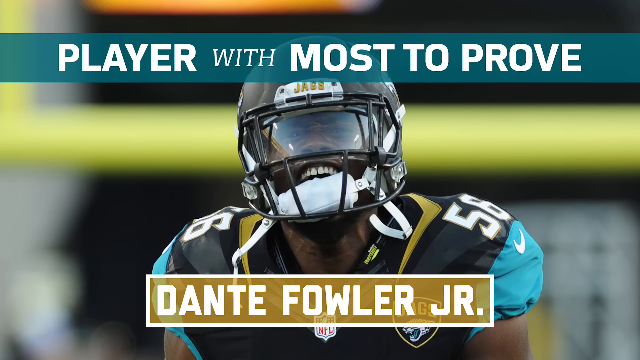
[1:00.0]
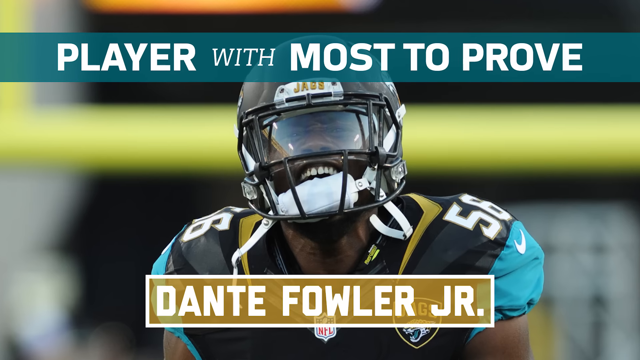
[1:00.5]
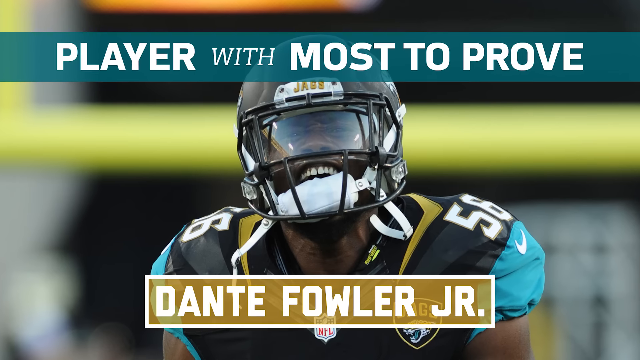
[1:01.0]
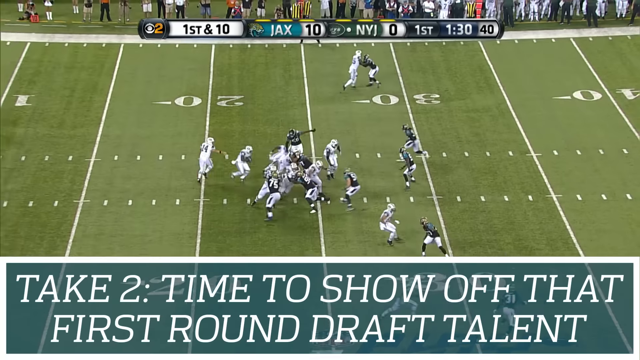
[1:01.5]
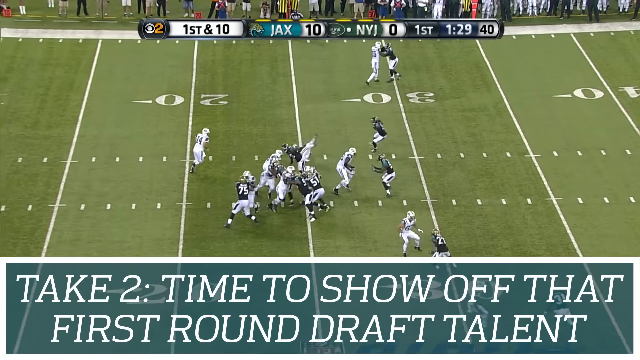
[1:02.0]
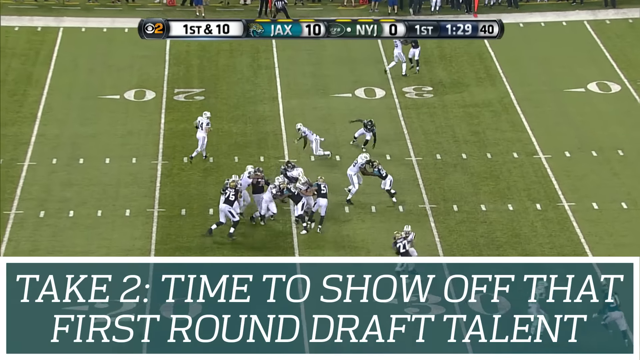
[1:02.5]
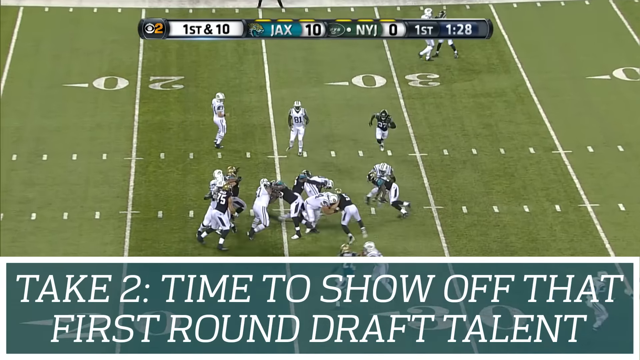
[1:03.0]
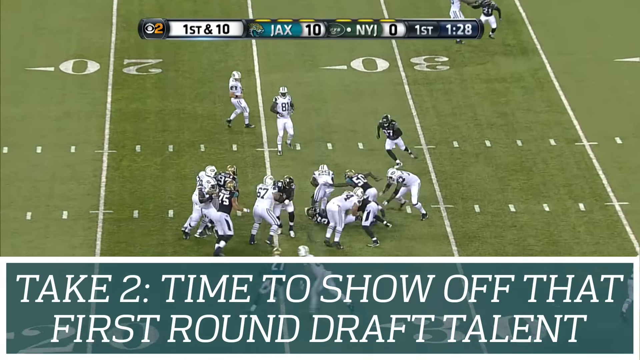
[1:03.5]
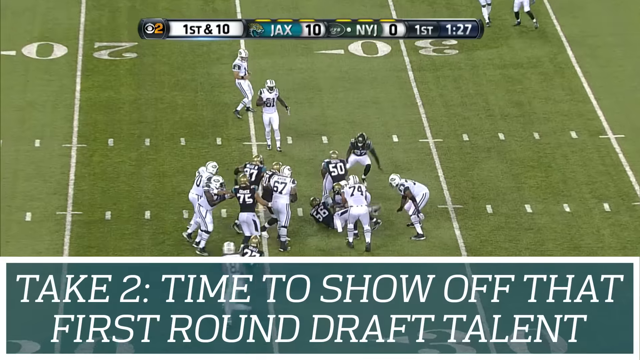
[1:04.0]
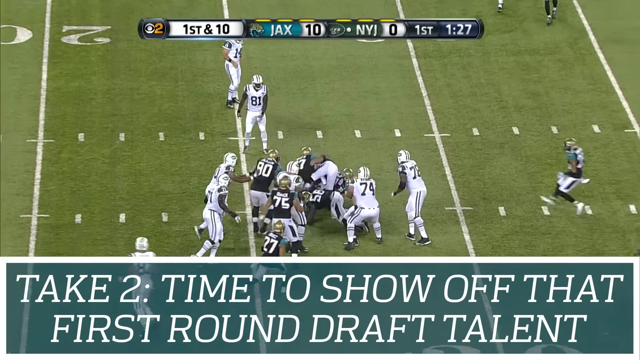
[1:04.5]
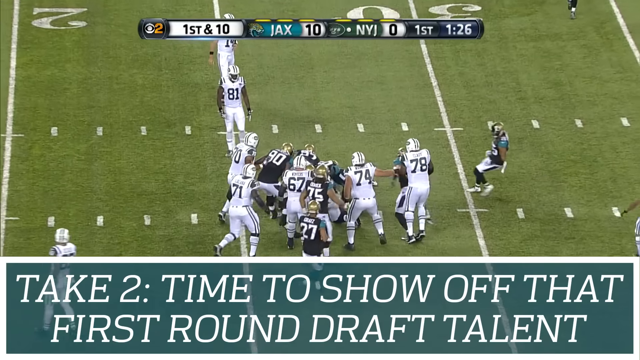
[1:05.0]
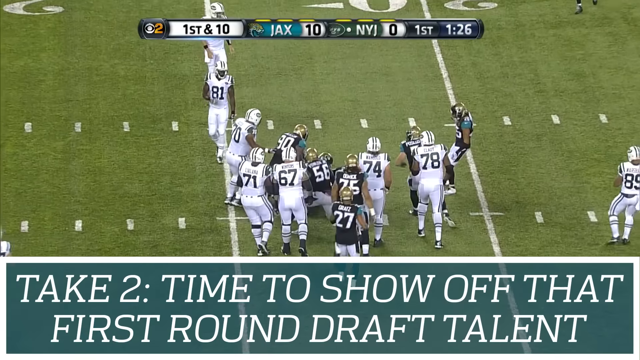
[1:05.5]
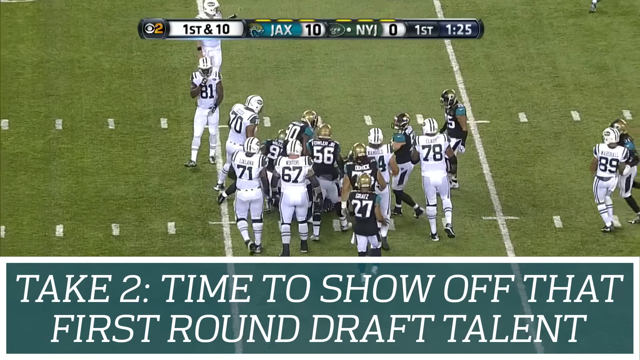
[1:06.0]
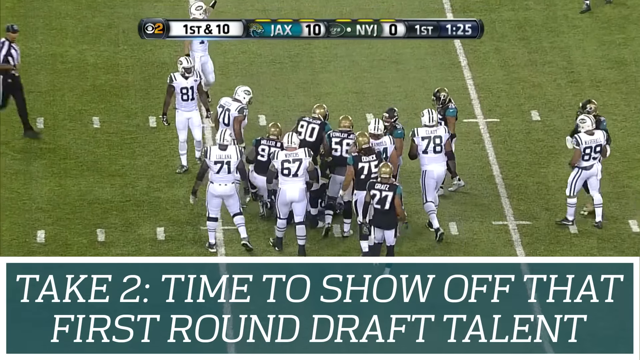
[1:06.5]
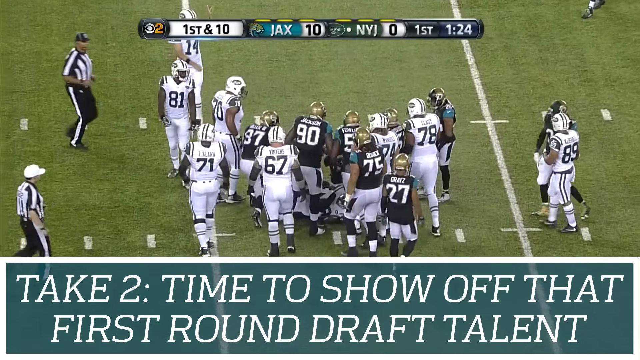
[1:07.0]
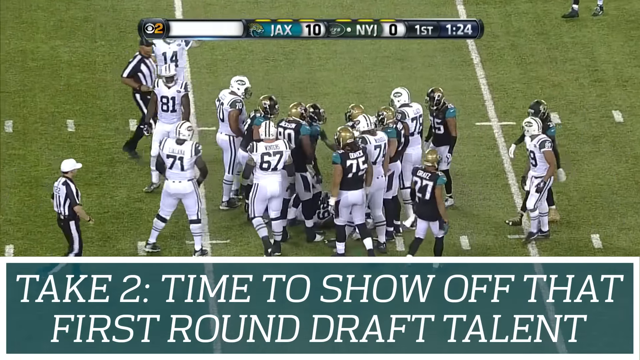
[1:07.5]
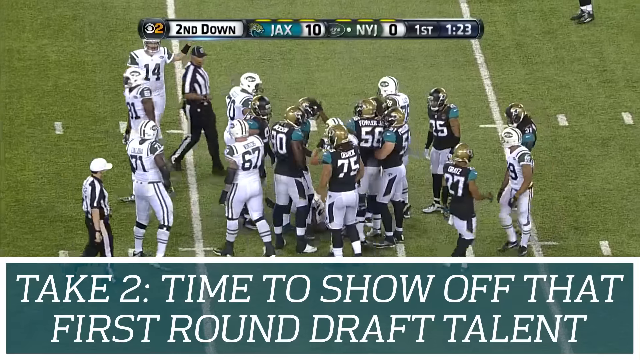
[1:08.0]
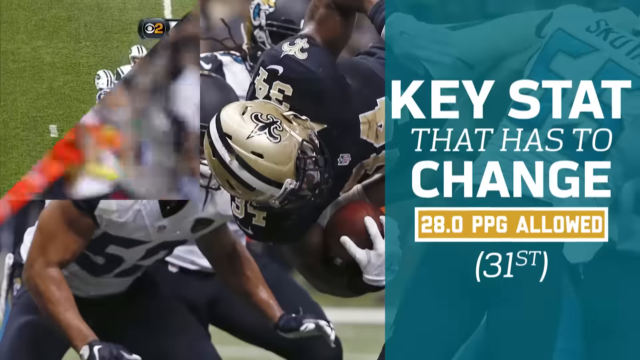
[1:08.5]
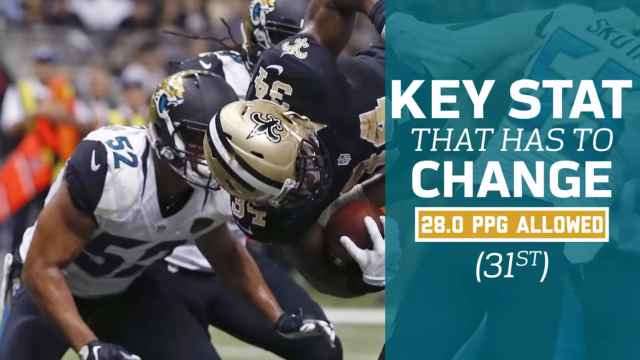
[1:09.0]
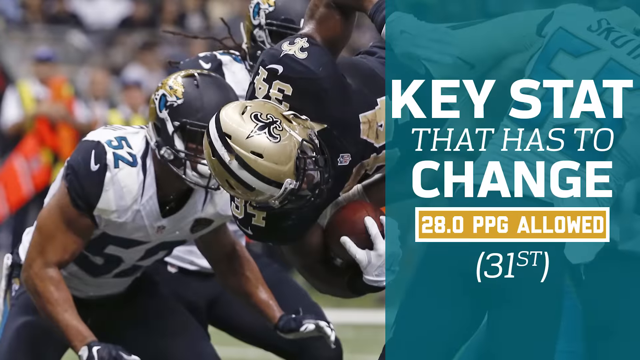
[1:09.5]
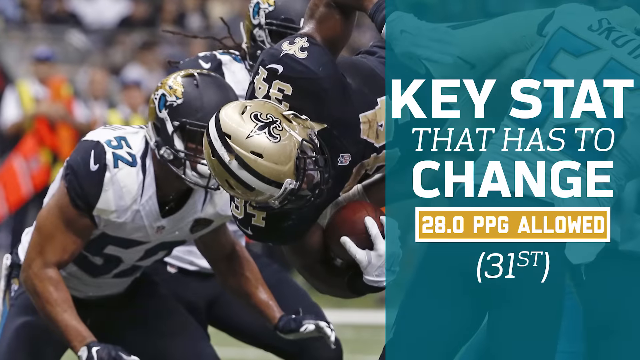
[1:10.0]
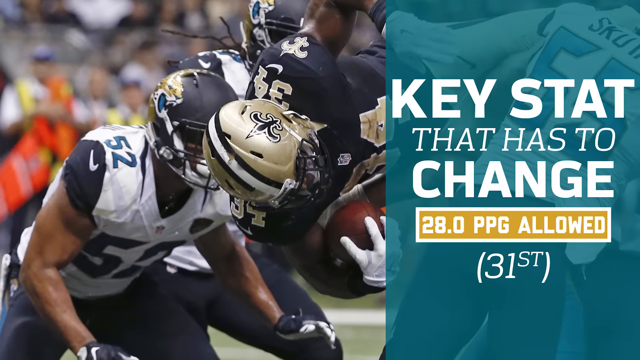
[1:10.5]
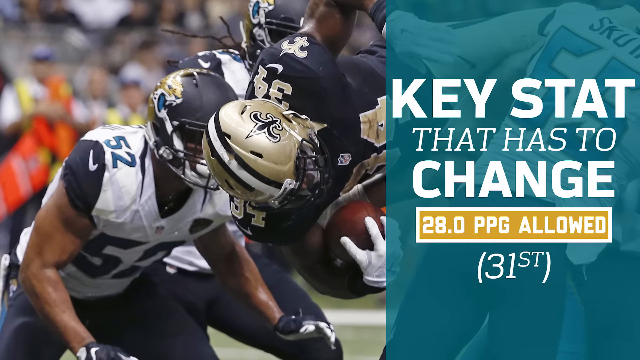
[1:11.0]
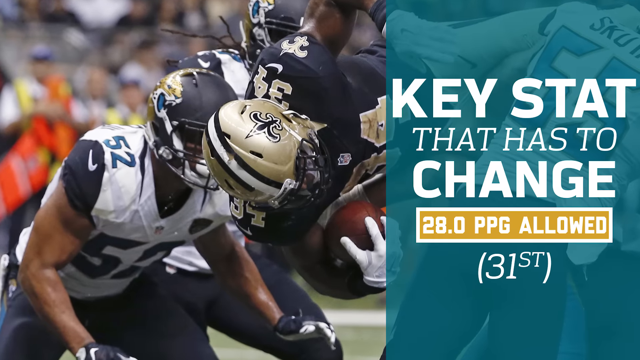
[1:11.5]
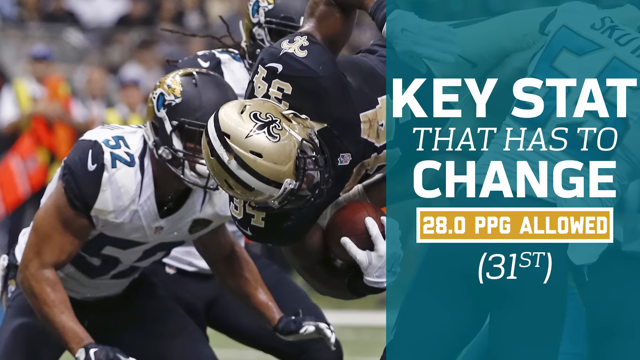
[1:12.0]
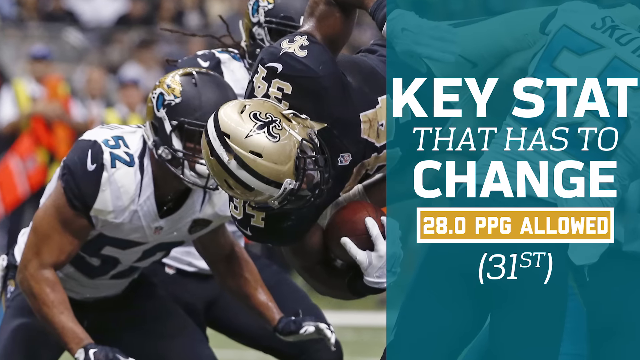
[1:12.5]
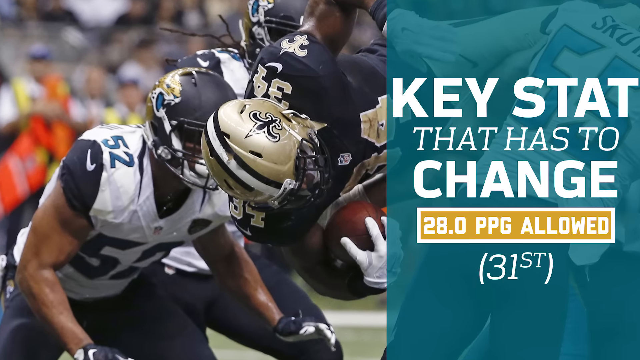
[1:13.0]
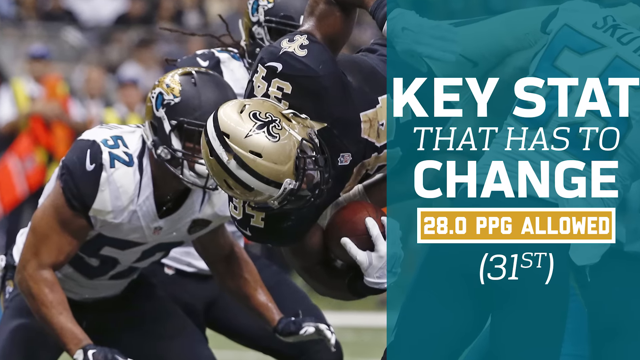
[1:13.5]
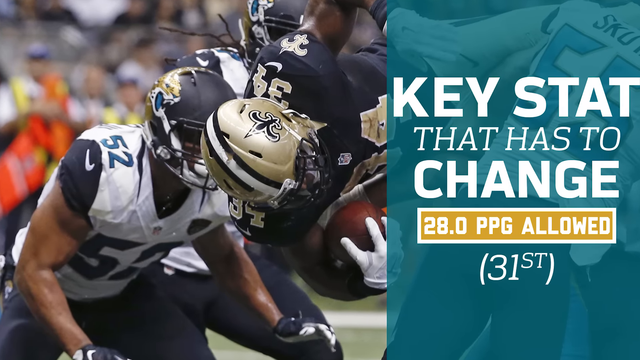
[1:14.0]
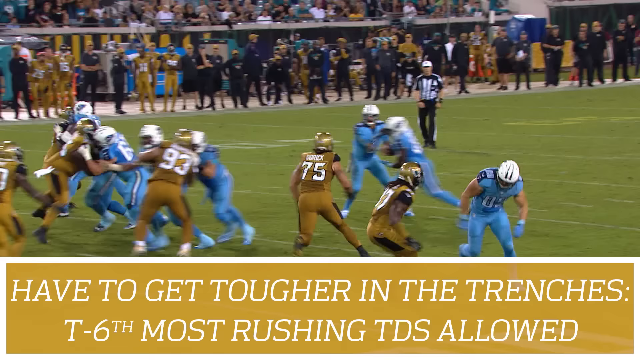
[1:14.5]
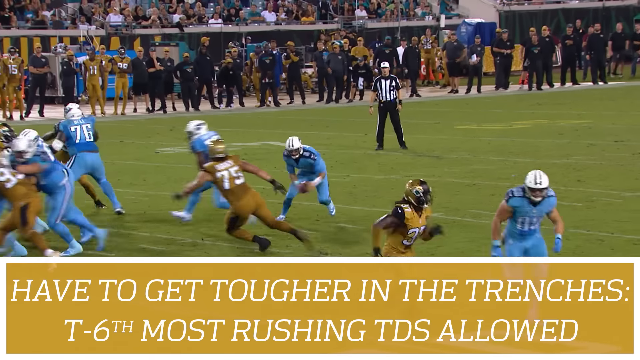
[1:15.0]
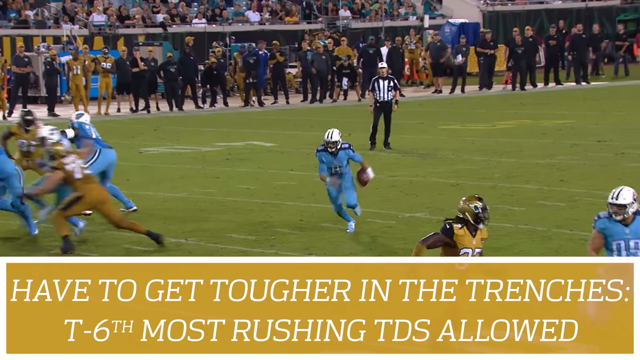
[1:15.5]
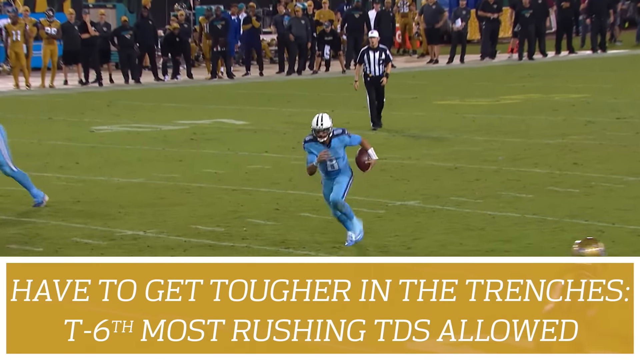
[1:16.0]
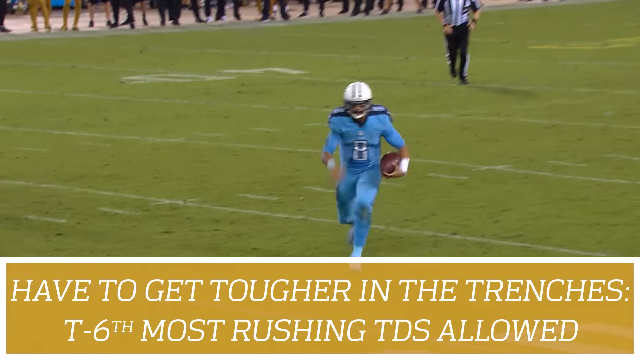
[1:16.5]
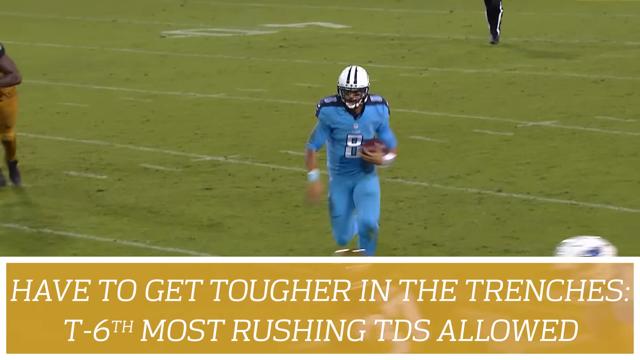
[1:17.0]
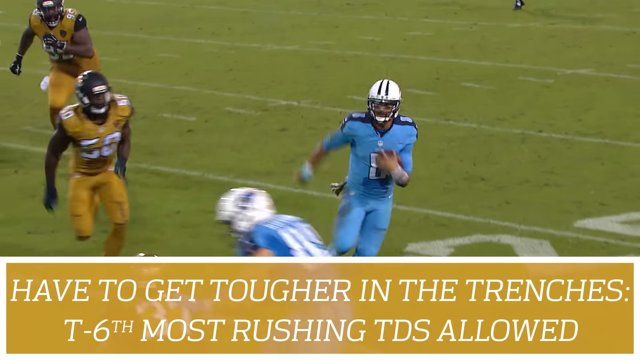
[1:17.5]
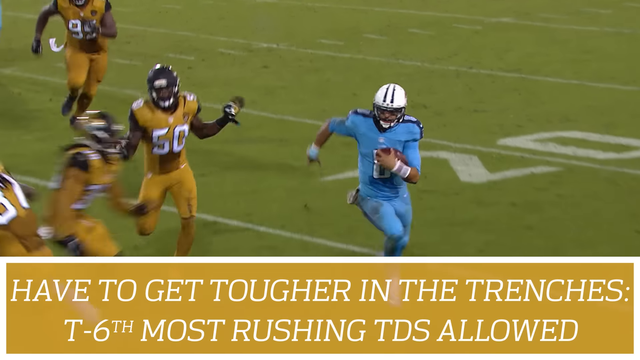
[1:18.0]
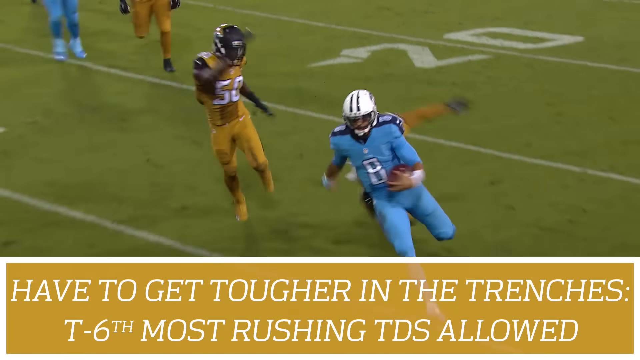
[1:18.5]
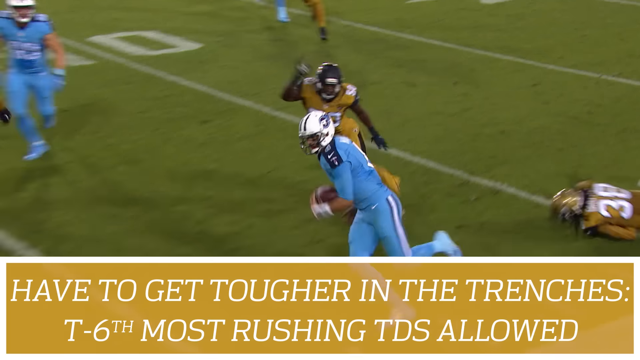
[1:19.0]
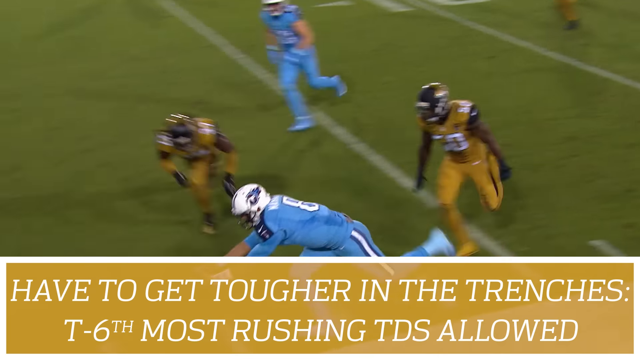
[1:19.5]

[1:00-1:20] In a game between the New York Jets and the Jacksonville Jaguars, the Jets have the ball and run it up the middle; the running back has to go through many defenders, who swamp him and tackle him to the ground, stopping the run. The scene changes to the words "key stat that has to change. 28 points per game allowed, 31st in the league" on the right. On the left is a still image of a New Orleans Saints player with the ball, apparently the running back, in the air and sideways, with Jaguars defenders around him. In another game between the Jaguars and the Tennessee Titans, the Titans quarterback takes the snap and takes off running to the right with the ball. He avoids a couple of Jaguars defenders and dives into the end zone.